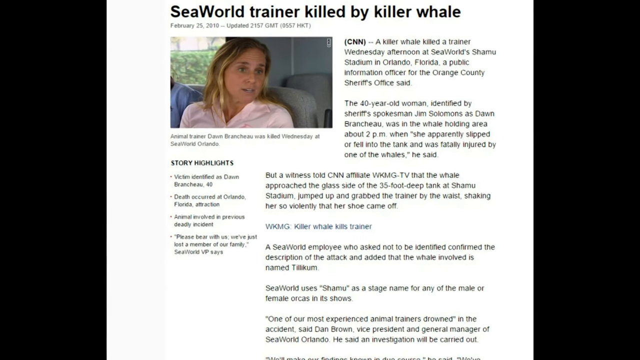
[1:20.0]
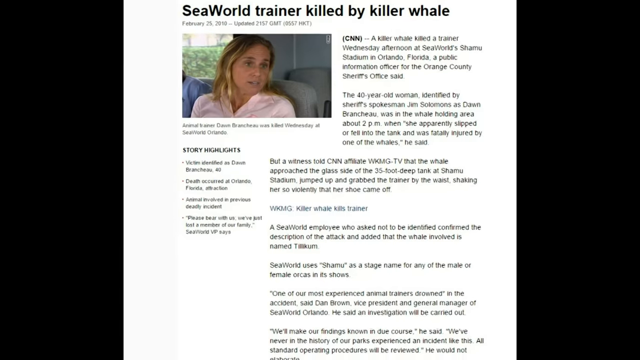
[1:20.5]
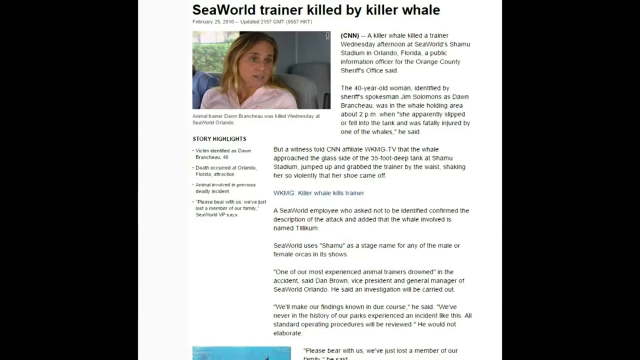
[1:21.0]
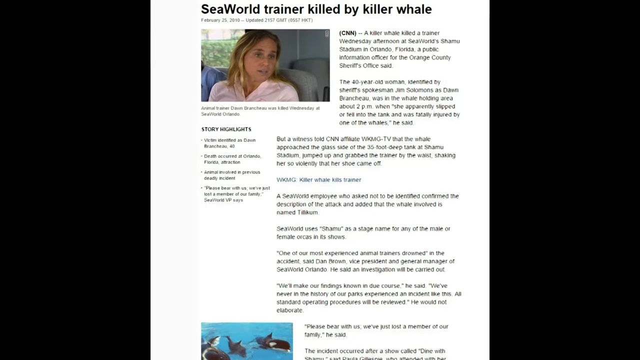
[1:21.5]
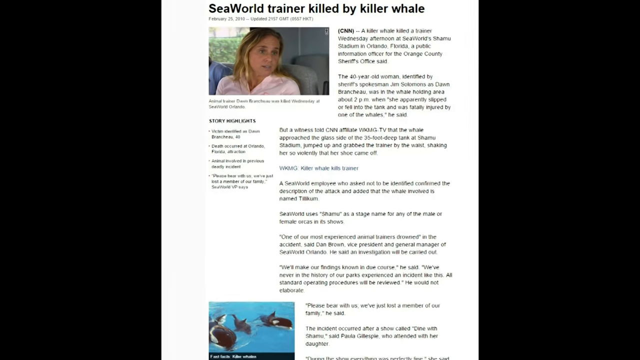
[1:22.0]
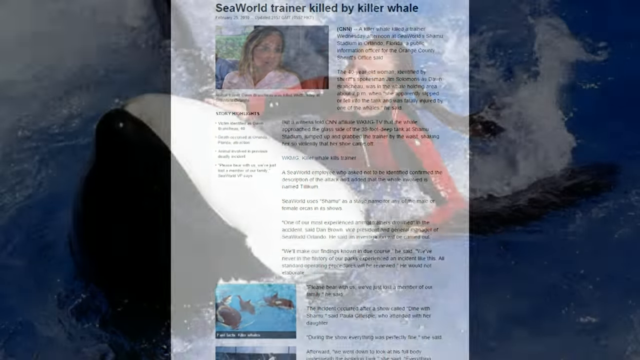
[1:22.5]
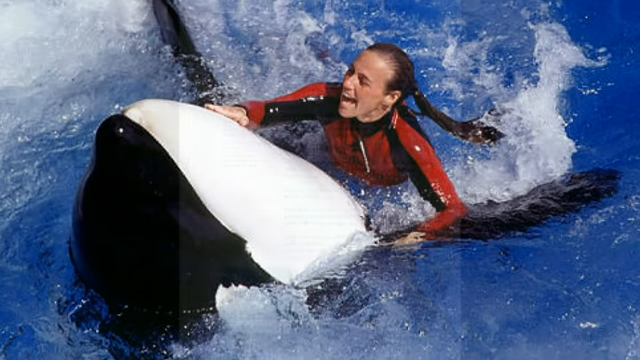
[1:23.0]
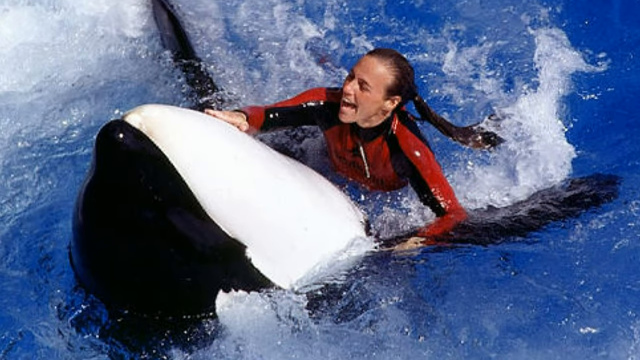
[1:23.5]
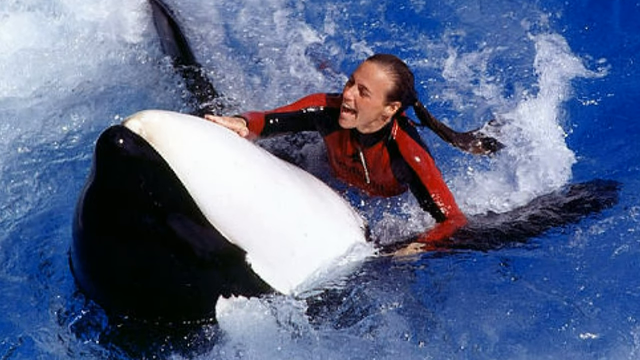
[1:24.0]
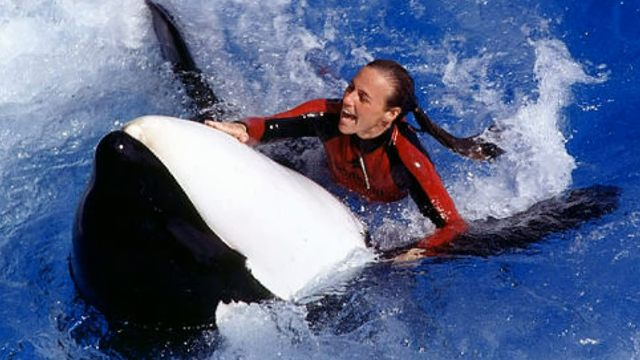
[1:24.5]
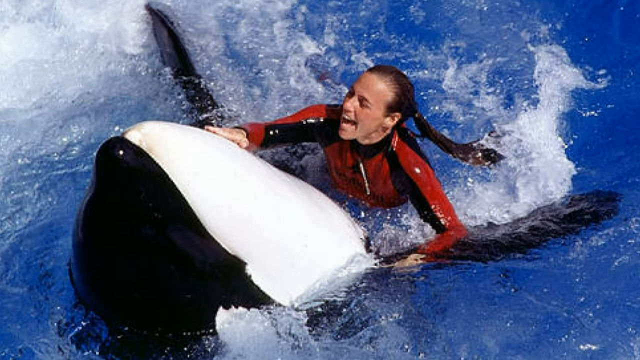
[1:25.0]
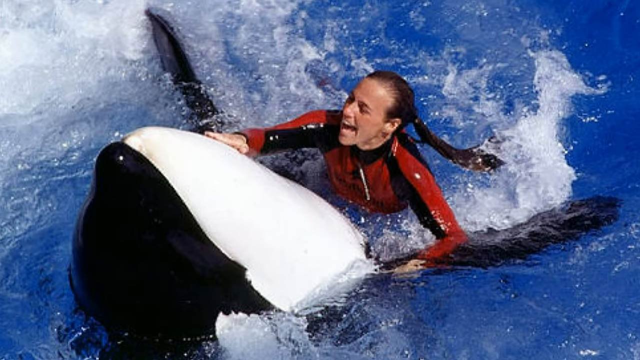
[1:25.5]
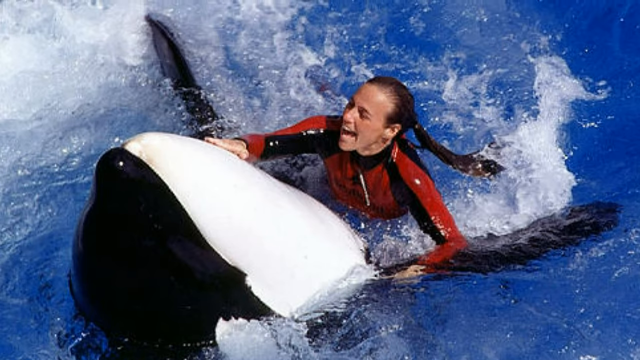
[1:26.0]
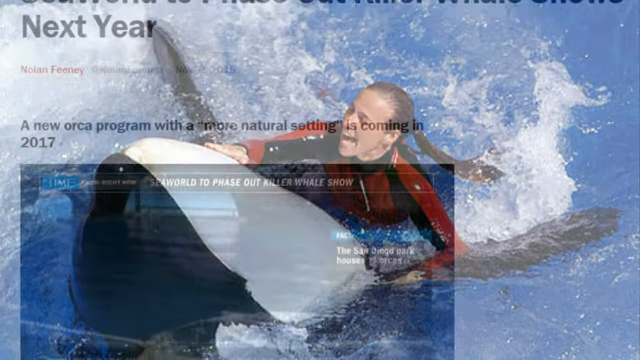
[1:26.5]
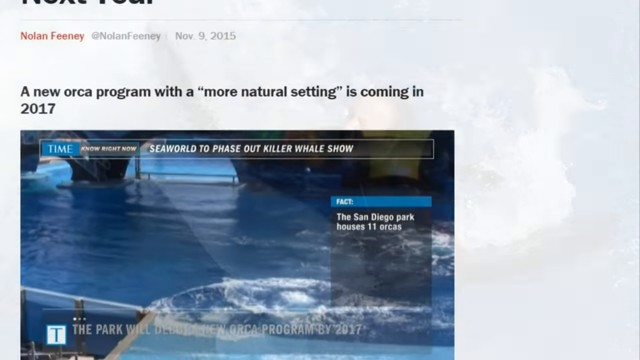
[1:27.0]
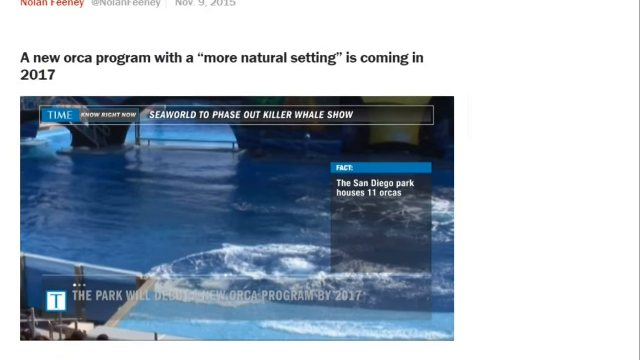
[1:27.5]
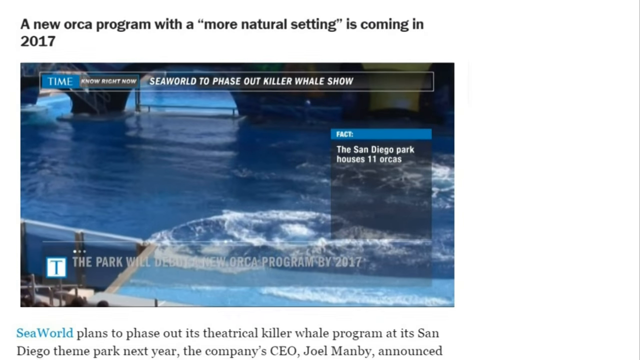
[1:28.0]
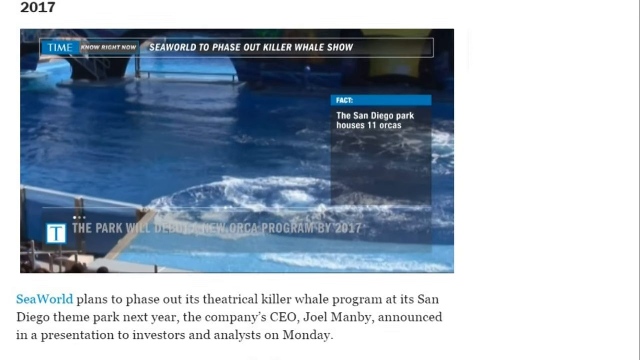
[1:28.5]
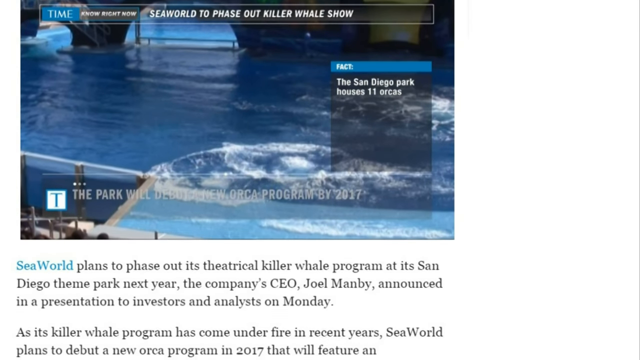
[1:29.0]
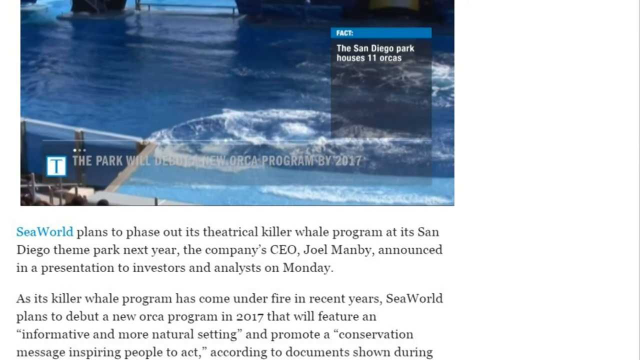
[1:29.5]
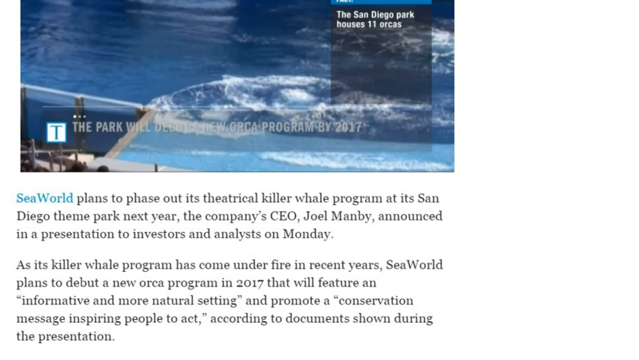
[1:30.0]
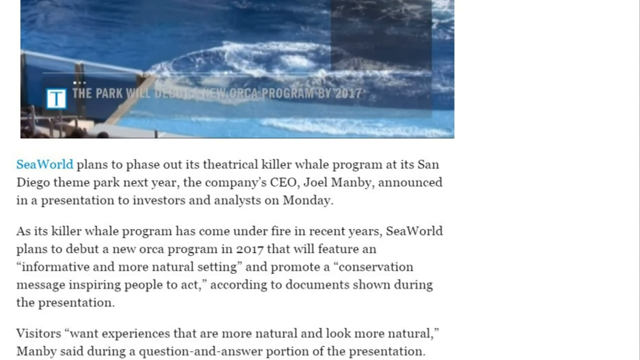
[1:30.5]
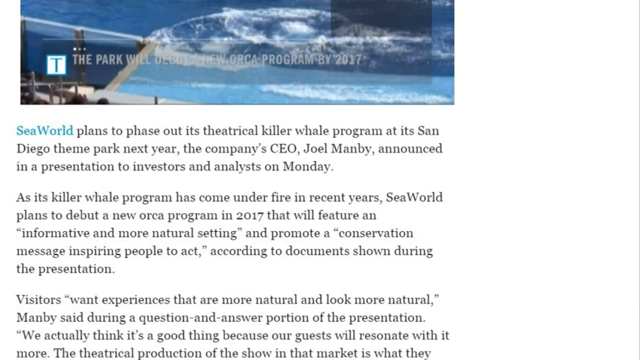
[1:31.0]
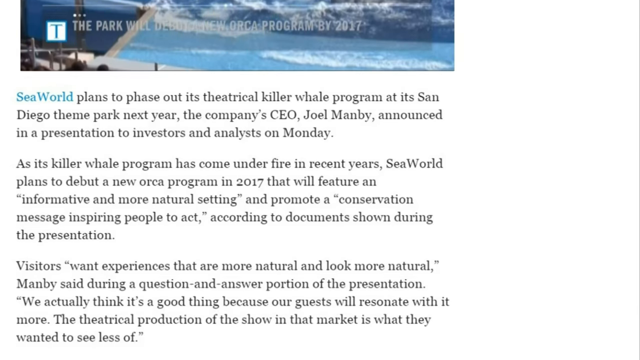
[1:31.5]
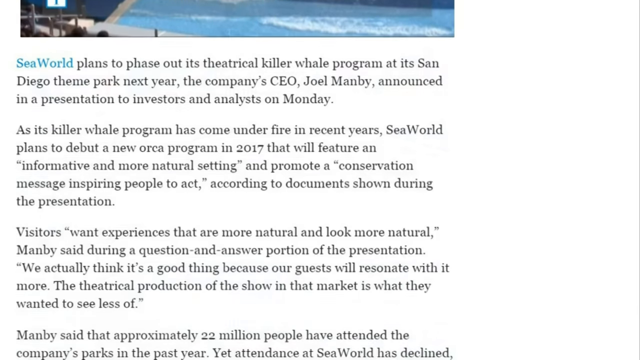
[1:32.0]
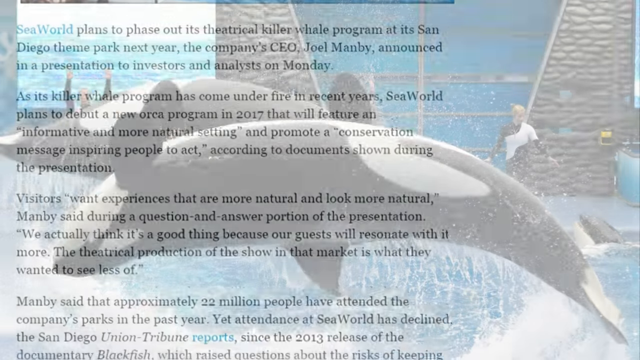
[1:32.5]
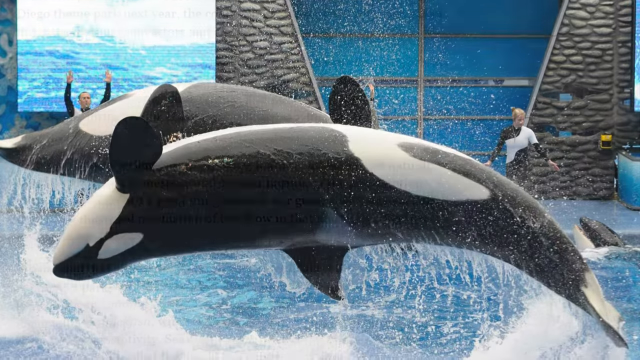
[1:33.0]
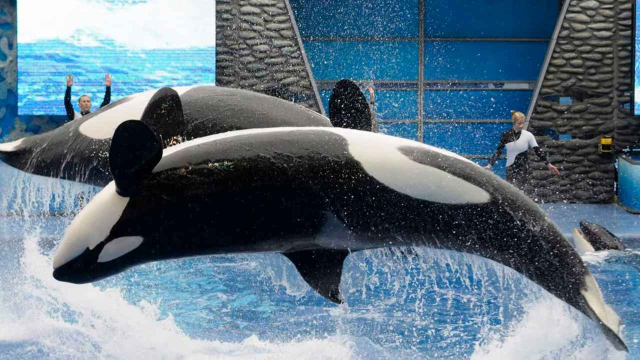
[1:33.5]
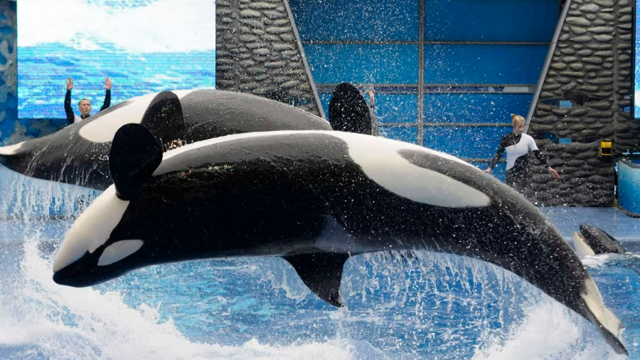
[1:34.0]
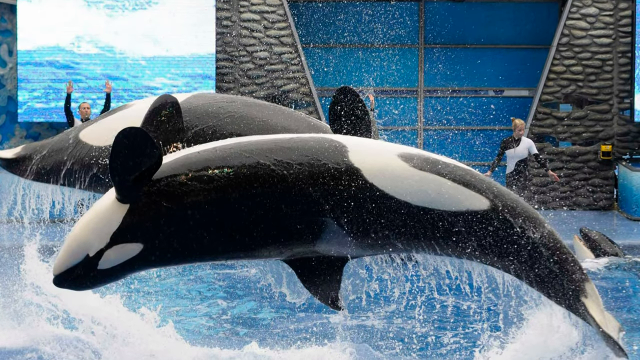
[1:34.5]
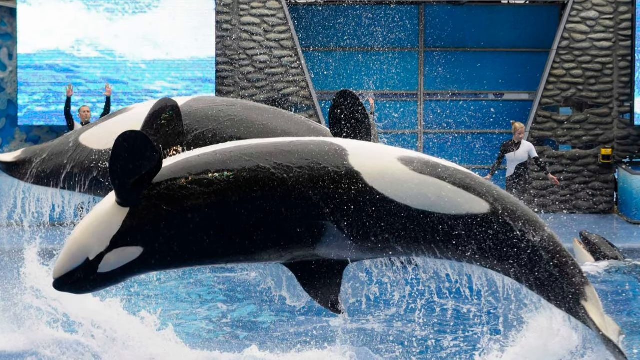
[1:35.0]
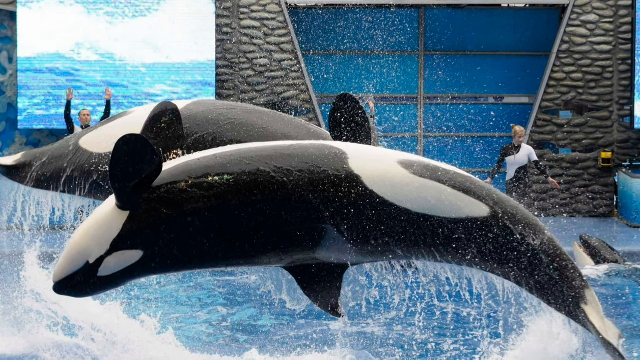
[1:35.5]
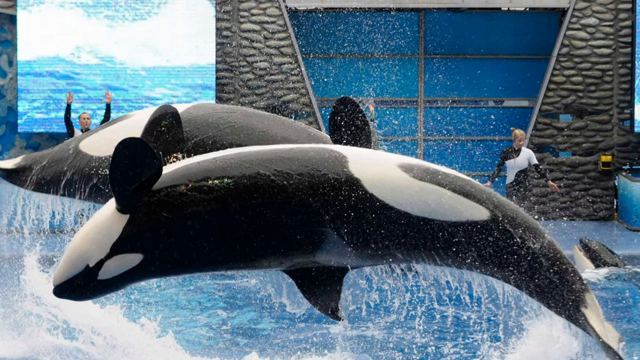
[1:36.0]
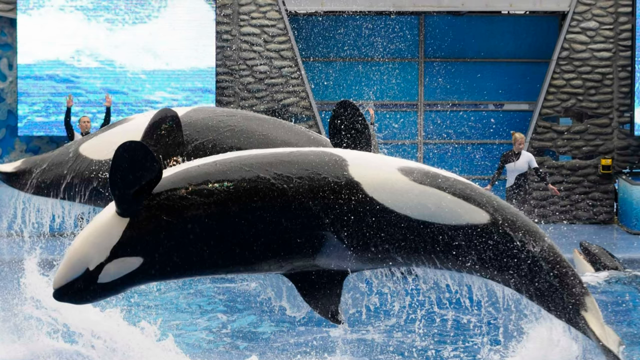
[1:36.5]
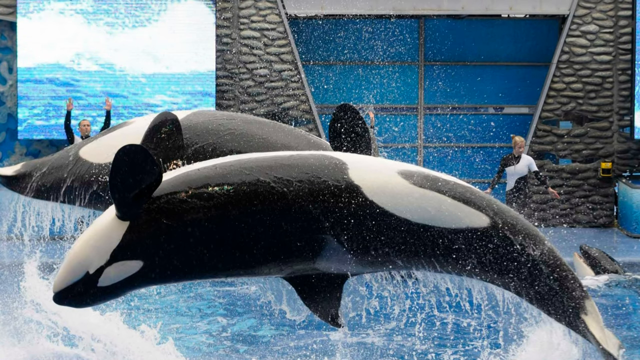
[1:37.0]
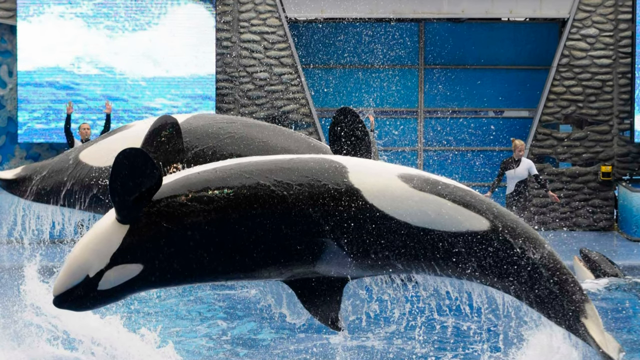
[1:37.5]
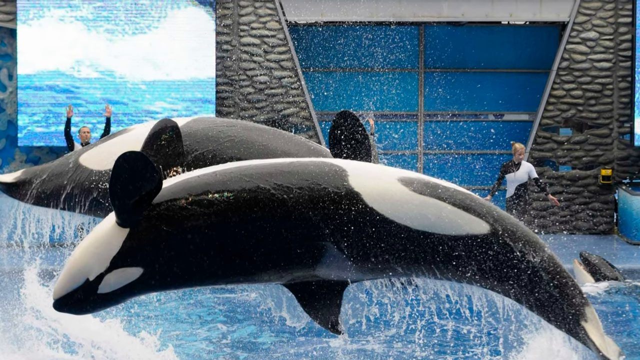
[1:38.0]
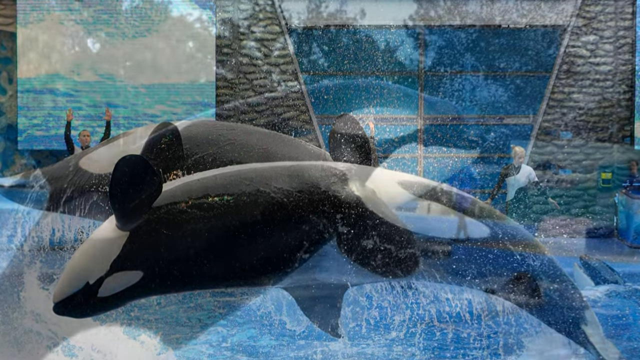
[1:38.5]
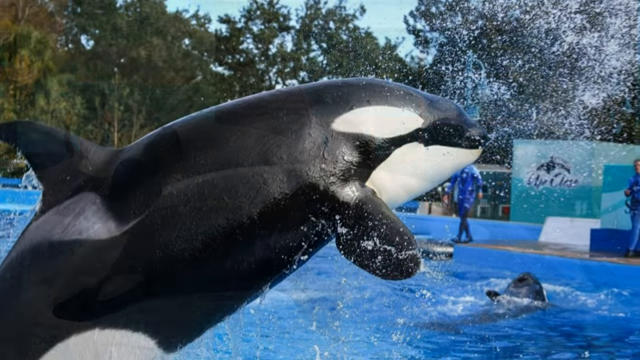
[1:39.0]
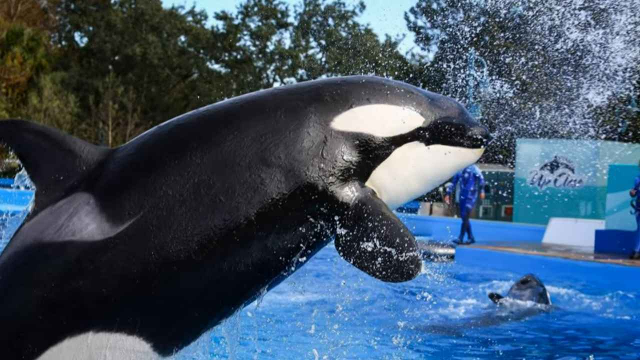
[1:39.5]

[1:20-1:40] An article shows the headline "Seaworld trainer killed by a killer whale" in black on a white background, with an image of a woman with dark brown hair in a light pink dress seated on an olive-colored chair. Text below reads "CNN, a killer whale killed a trainer Wednesday afternoon at Seaworld Stadium in Orlando, Florida, a public information officer for the Orange County Sheriff's Office said," and there are story highlights. The video zooms out to show more information, then transitions to a swimming instructor in red and black trunks holding on to a giant black and white orca as it splashes in a river. Next, text says "a new aqua program with a more natural setting is coming in 27" over a still image of water, followed by more article text beginning "Seaworld plans to phase out its" and mentioning a killer whale program at the San Diego theme park next year and the company's CEO Joe Manby announcing it in a presentation to investors. The video then shows two giant black and white orcas backflipping while water splashes underneath, as two trainers stand watching; one has both hands up and wears black swimming trunks, while the other woman wears black and white swimming trunks.